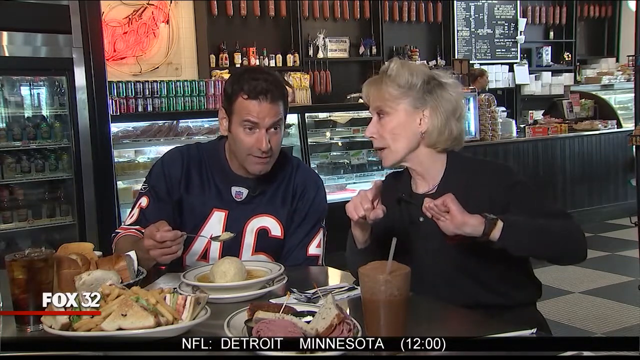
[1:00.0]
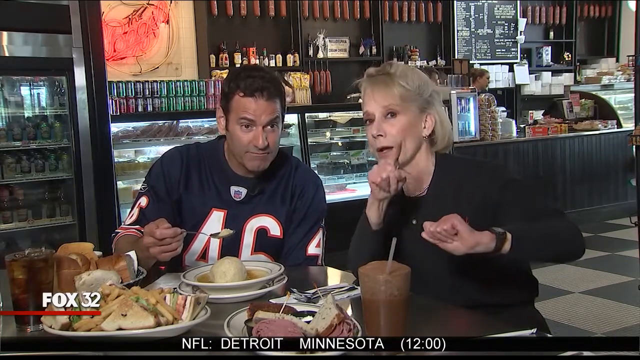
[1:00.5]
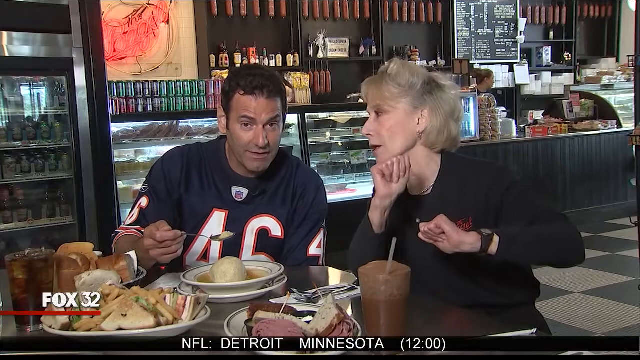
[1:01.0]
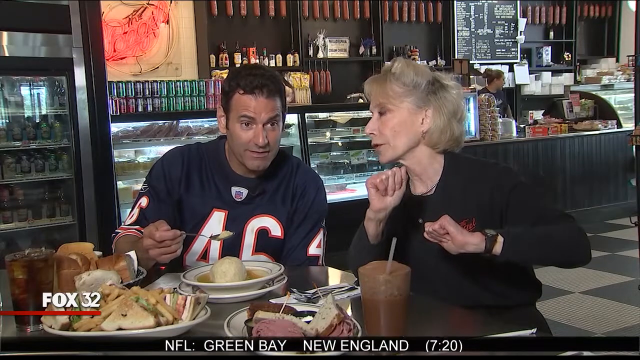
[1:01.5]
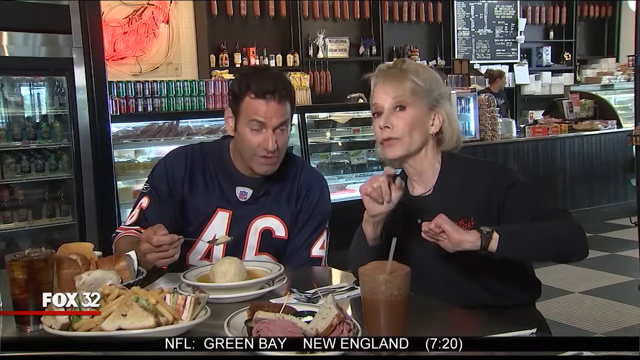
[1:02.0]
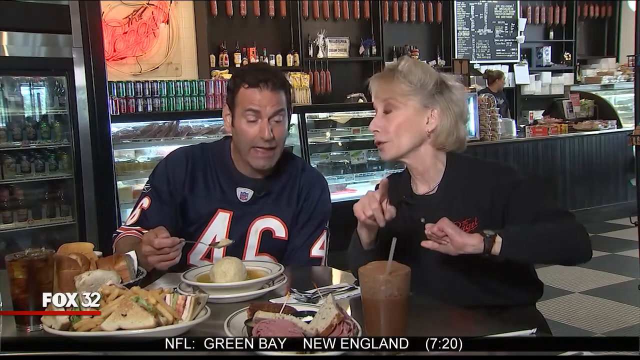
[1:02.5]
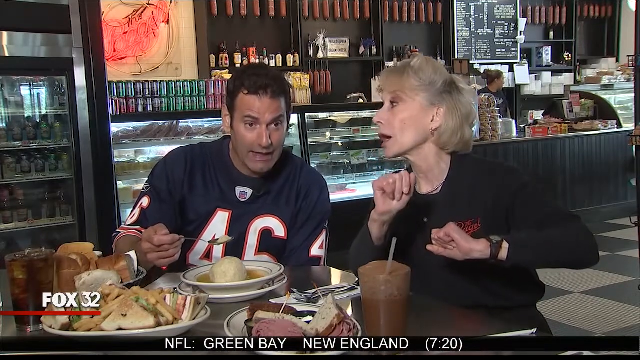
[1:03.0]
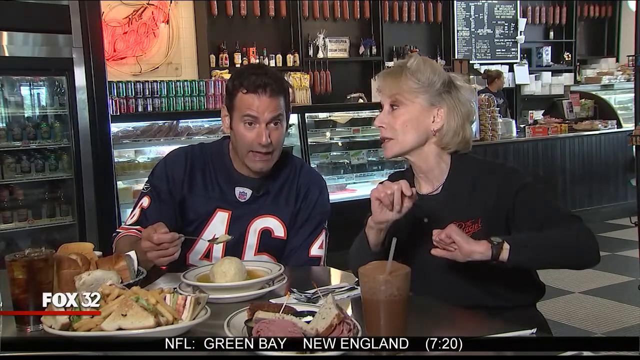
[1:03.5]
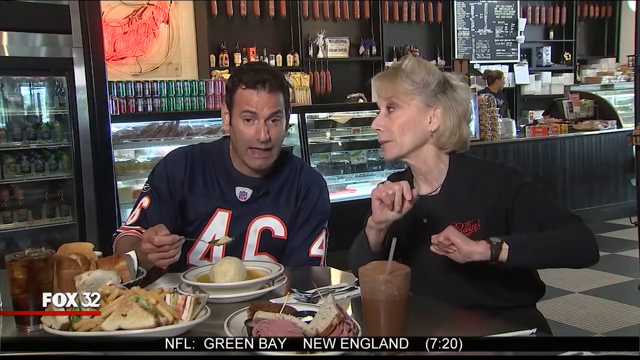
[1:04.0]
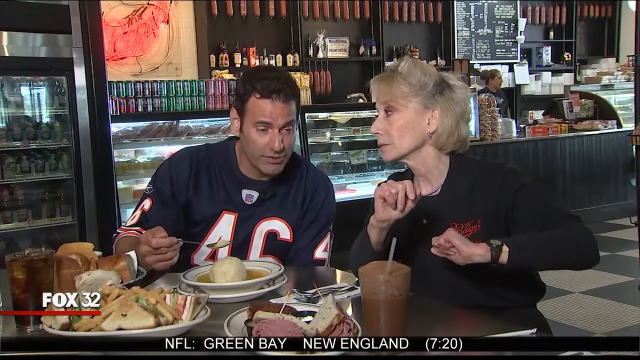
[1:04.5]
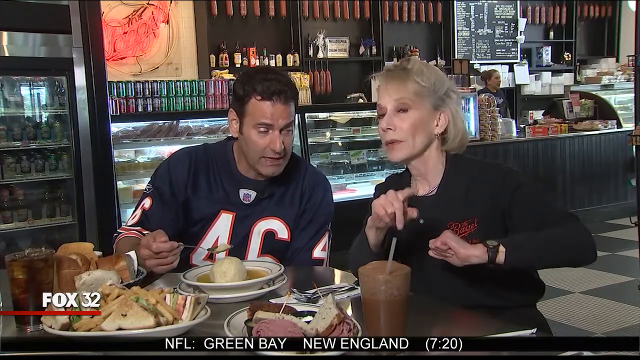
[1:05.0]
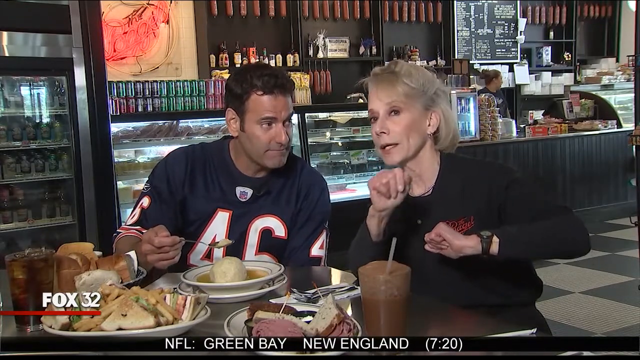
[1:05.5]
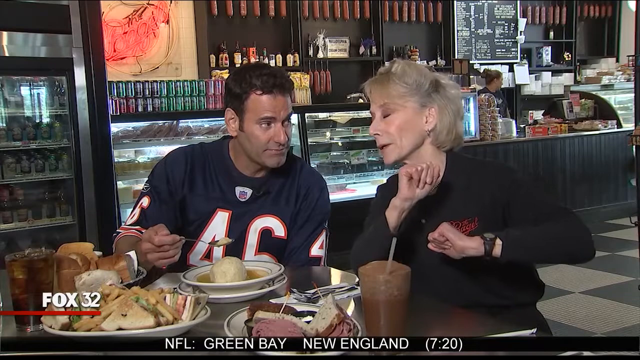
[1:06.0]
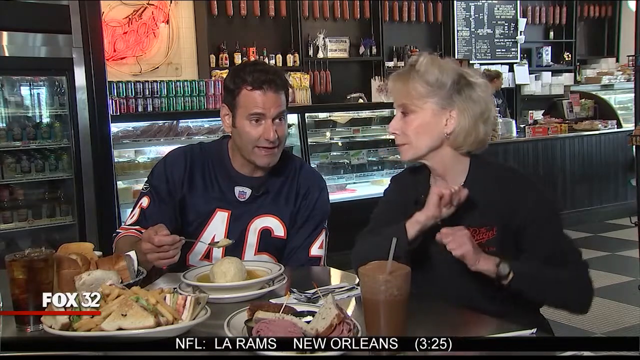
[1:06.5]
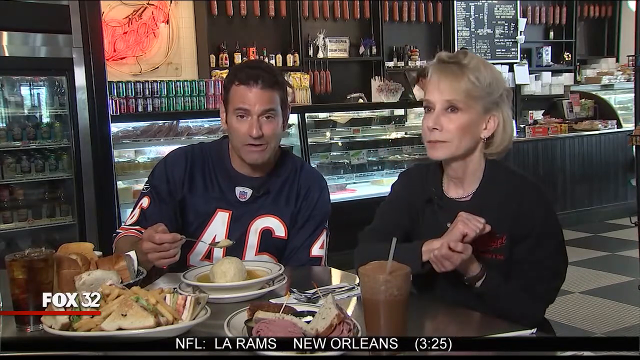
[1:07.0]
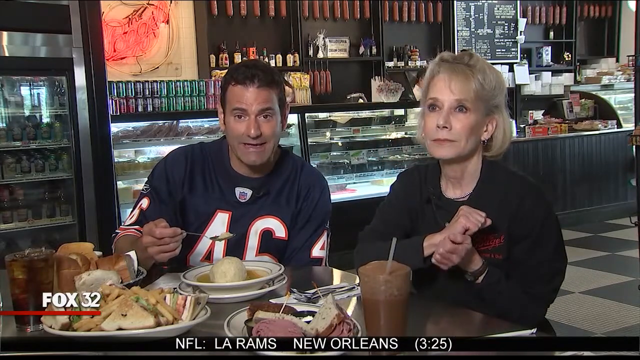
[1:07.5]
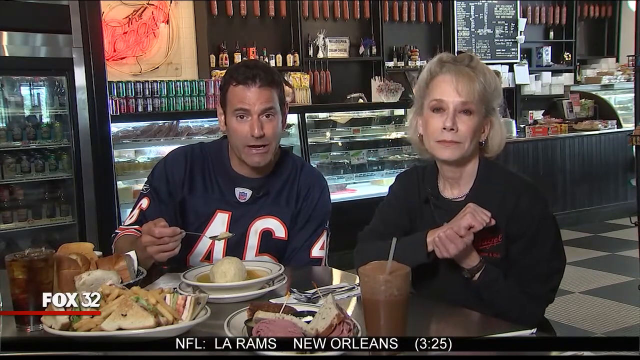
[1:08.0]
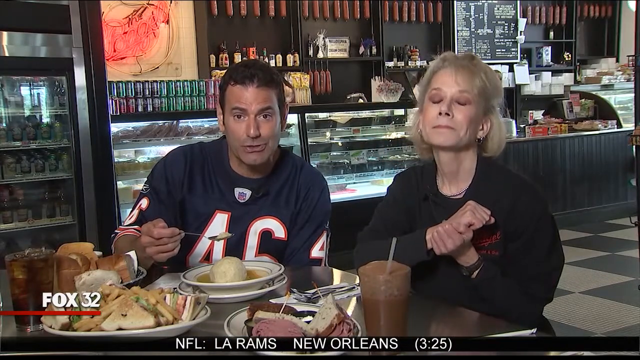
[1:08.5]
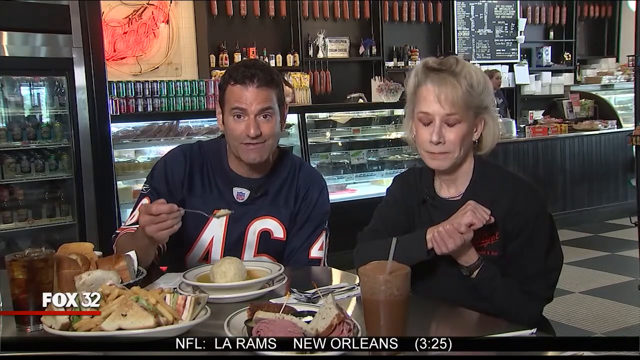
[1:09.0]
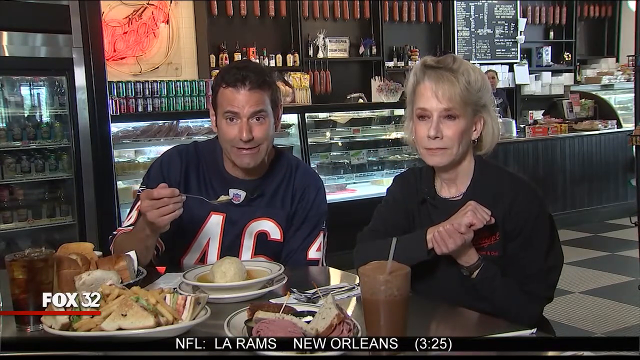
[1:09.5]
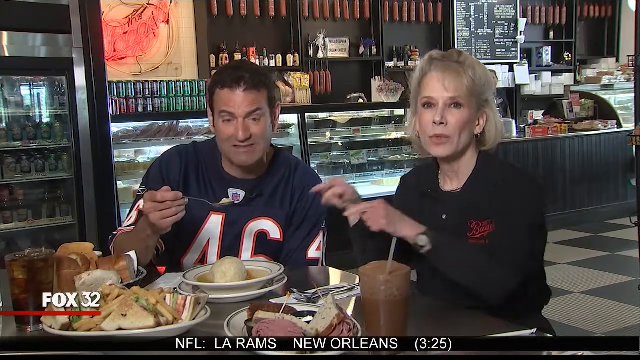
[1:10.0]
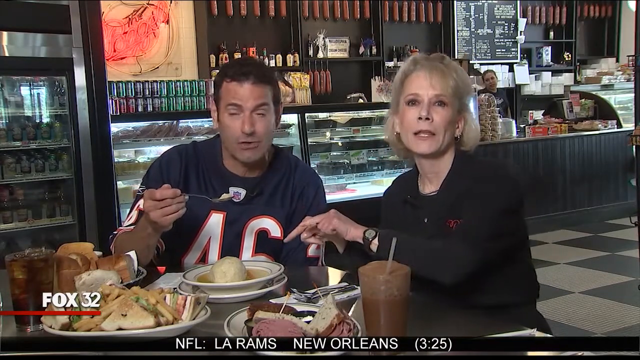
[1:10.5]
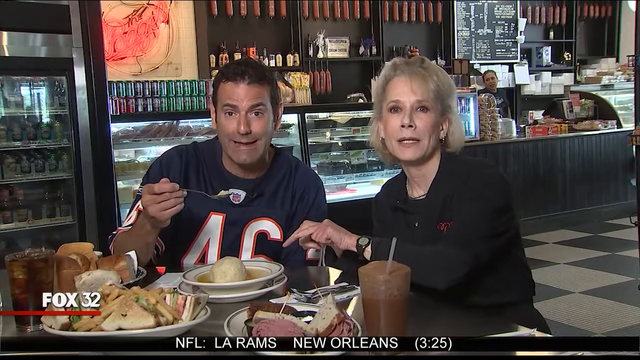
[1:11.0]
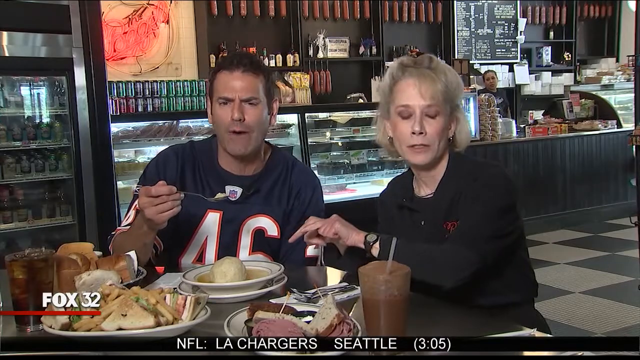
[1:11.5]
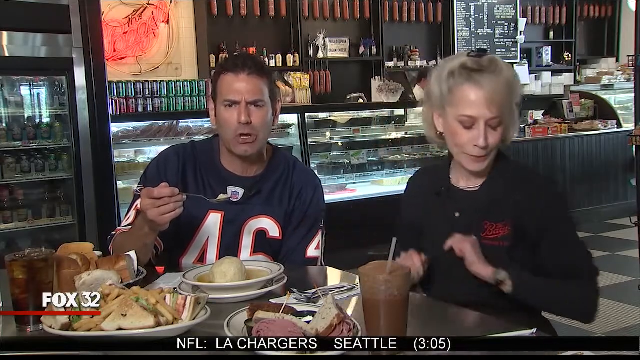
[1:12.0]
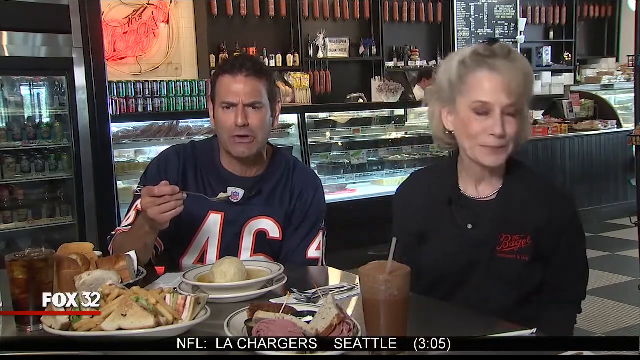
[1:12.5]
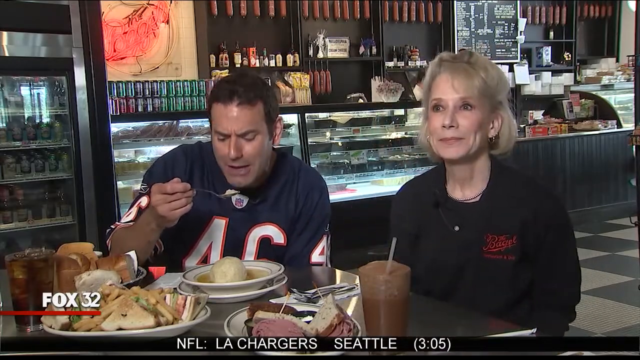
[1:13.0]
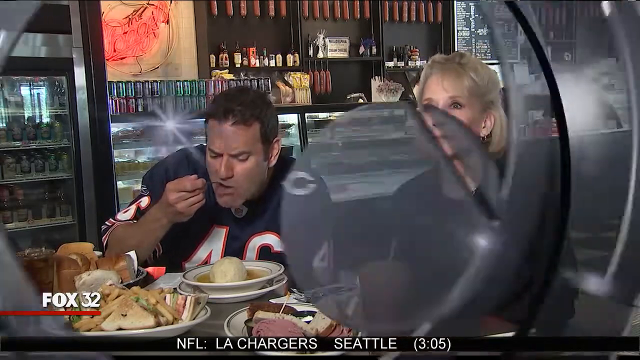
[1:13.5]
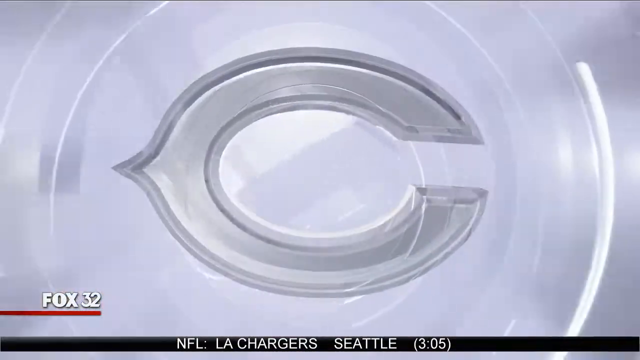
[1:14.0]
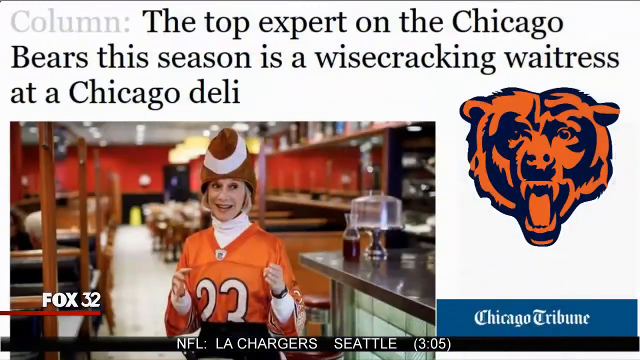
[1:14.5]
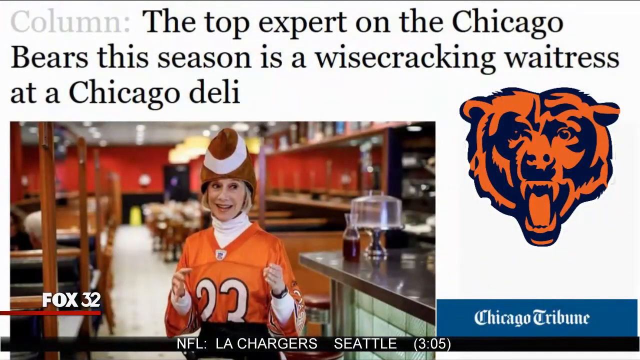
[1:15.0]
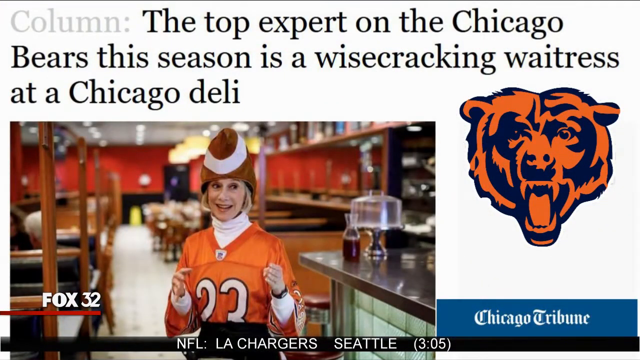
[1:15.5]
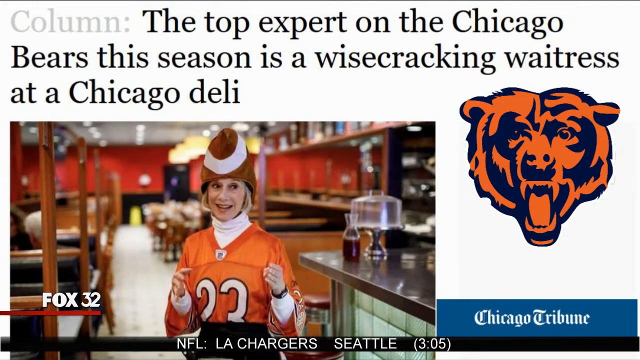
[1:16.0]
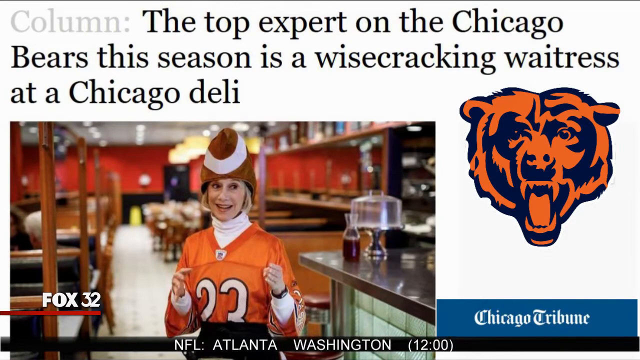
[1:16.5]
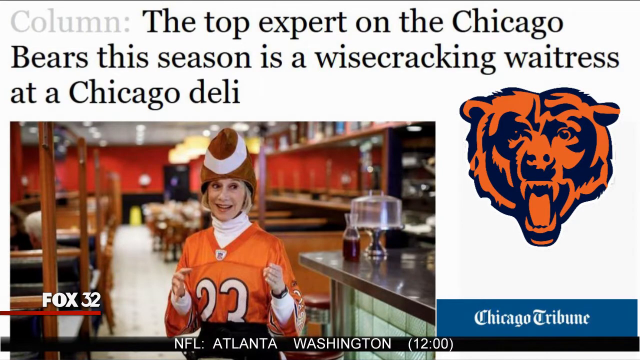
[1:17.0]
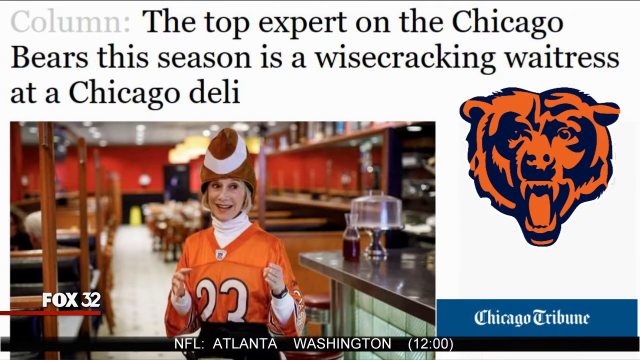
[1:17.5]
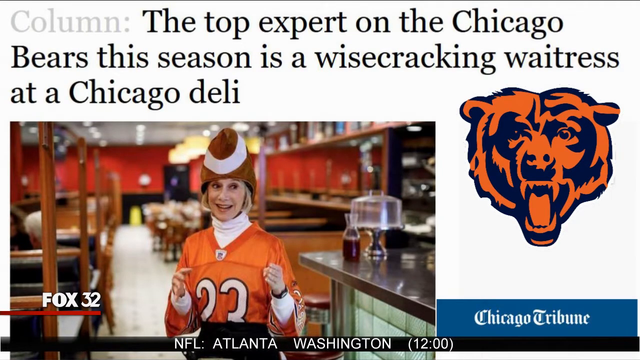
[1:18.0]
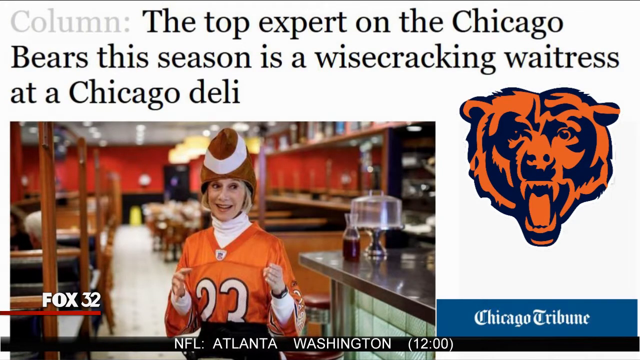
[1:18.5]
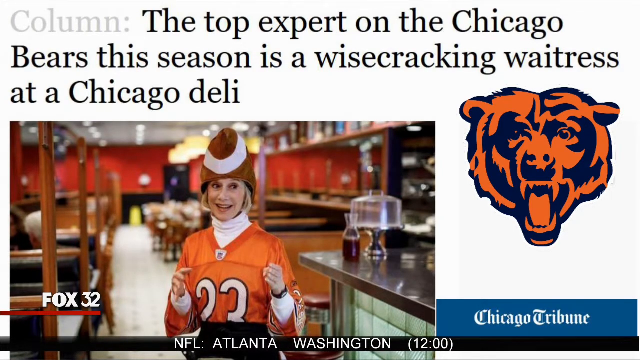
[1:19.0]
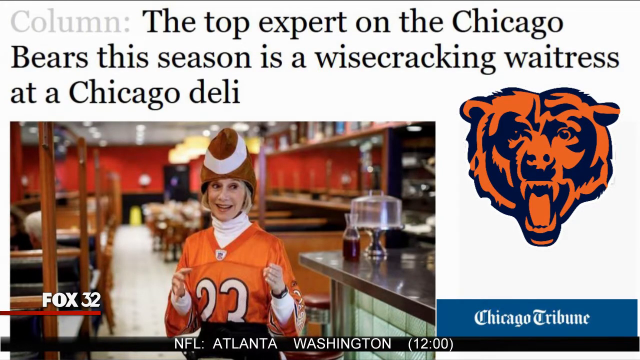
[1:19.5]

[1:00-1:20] Two people sit at a table with lots of food in a restaurant. The man on the left has a tan complexion and dark hair and wears a navy blue football jersey with the number 46 in white with an orange outline; he has a dish in front of him and eats while he talks. To his left, on the right, is an elderly lady with short white hair, apparently wearing a black chef uniform with a red logo stitched on her left side. They talk to each other and to the camera, pointing at the camera a lot and at one point pointing at the food being eaten. The lady is quite animated, talking with her hands a lot, and they appear to be talking about something positive. The shot then changes to the front of an online news article with the heading "the top expert on the Chicago Bears this season is a wise-cracking waitress at a Chicago deli." It includes an image of the same lady wearing a novelty hat shaped like an American football and an orange football jersey.